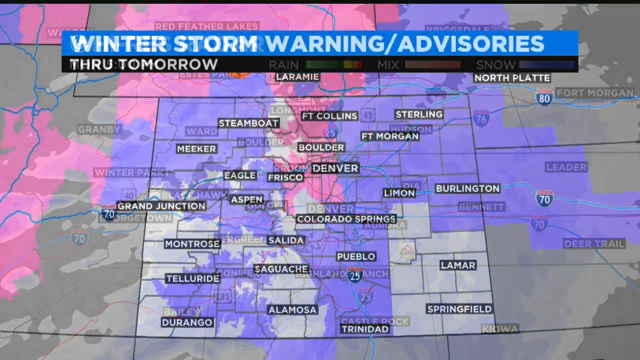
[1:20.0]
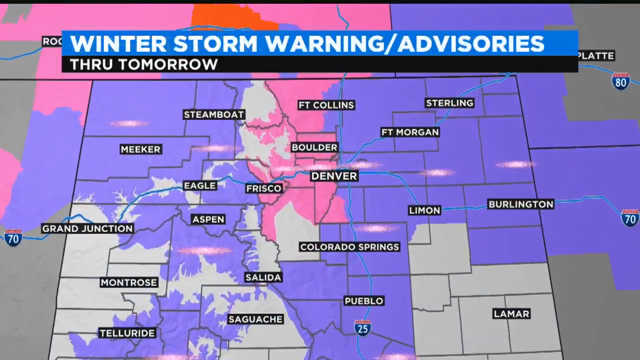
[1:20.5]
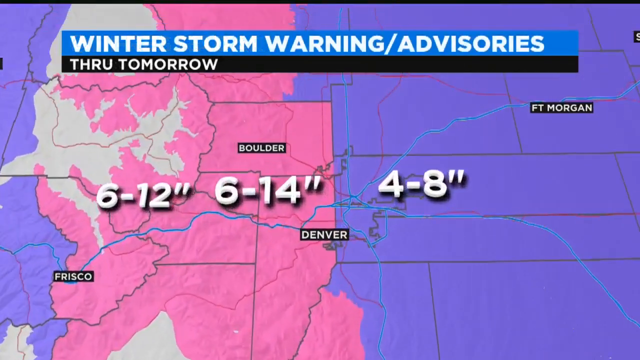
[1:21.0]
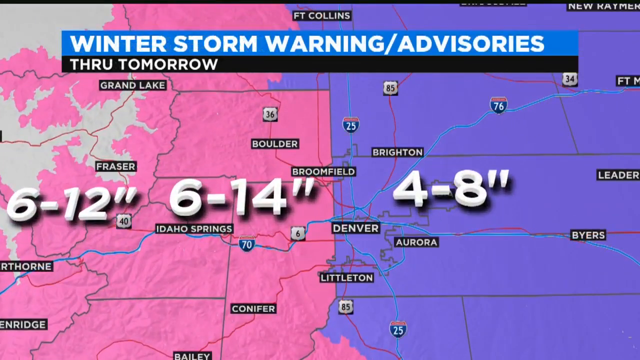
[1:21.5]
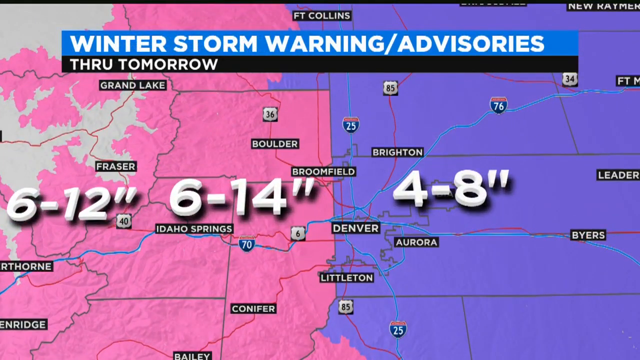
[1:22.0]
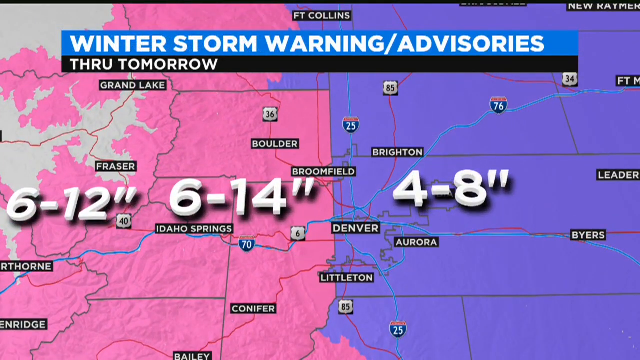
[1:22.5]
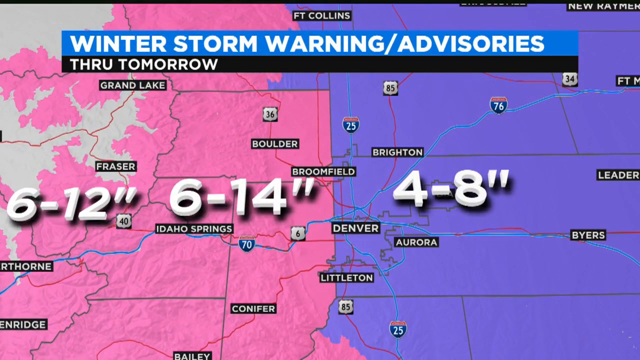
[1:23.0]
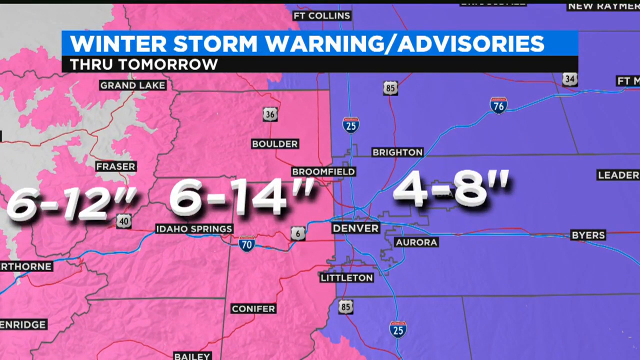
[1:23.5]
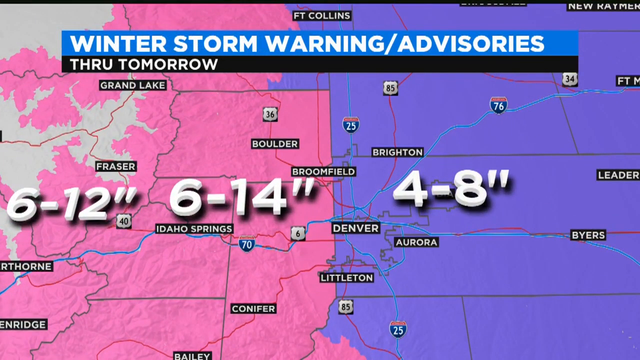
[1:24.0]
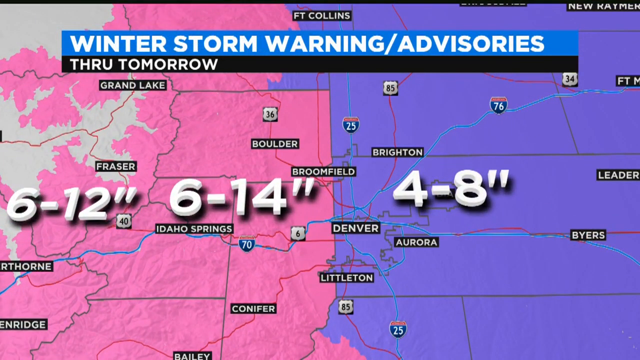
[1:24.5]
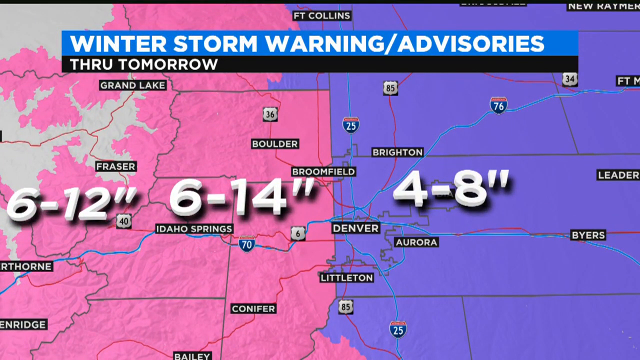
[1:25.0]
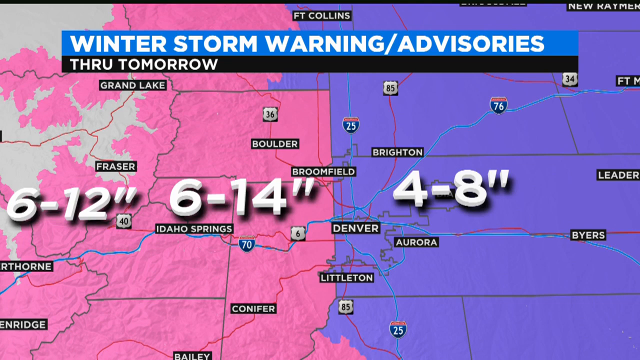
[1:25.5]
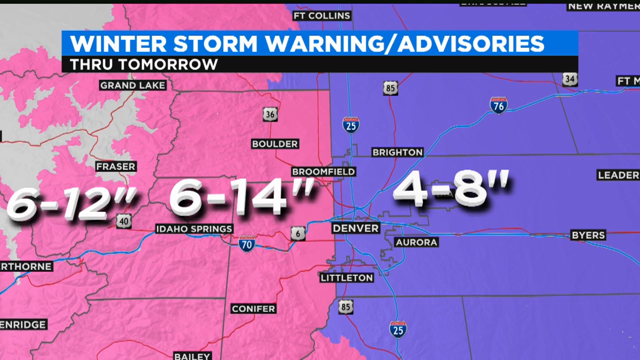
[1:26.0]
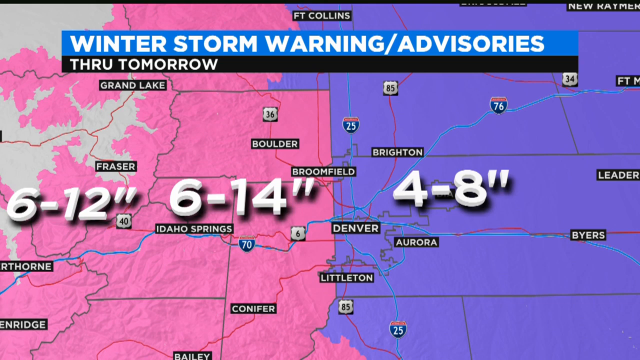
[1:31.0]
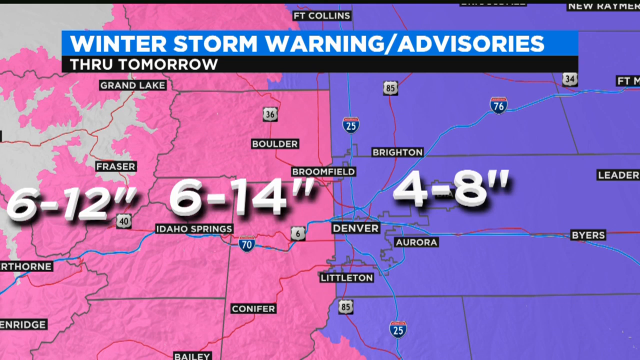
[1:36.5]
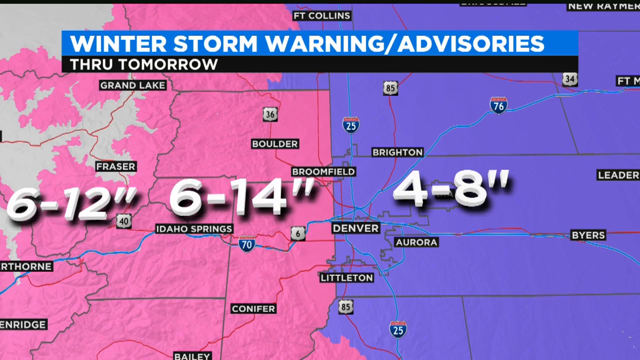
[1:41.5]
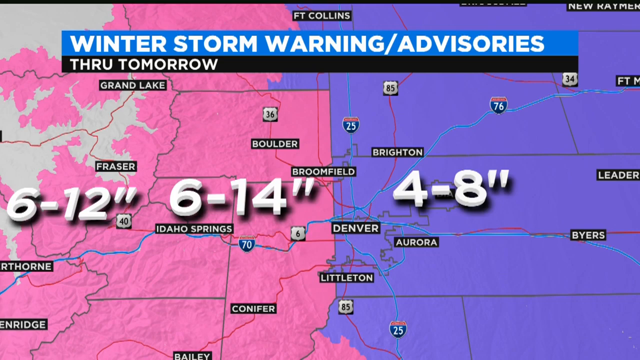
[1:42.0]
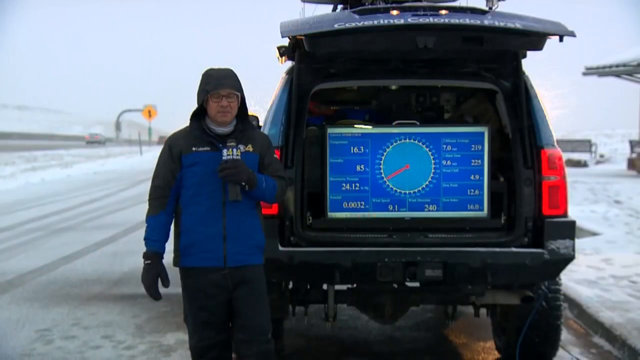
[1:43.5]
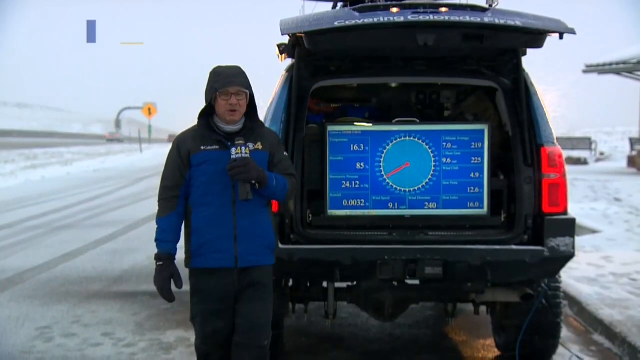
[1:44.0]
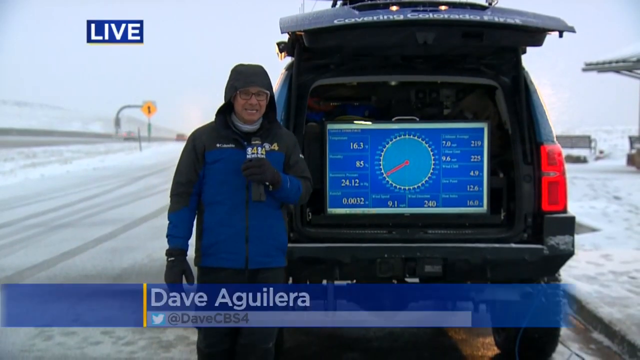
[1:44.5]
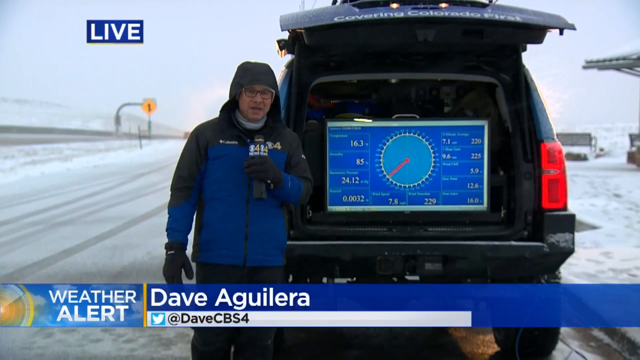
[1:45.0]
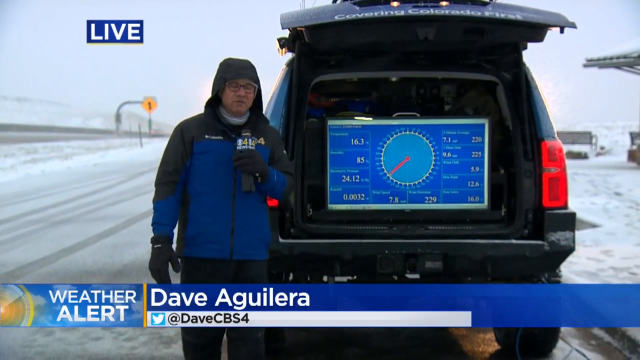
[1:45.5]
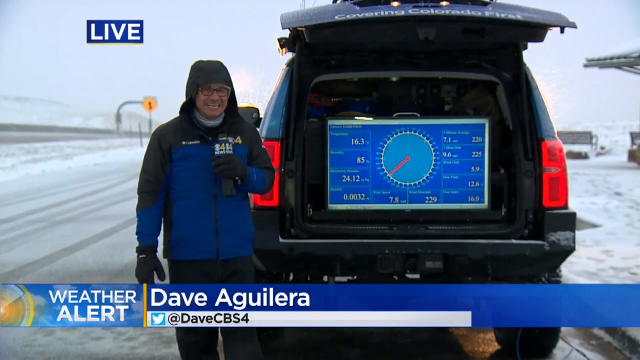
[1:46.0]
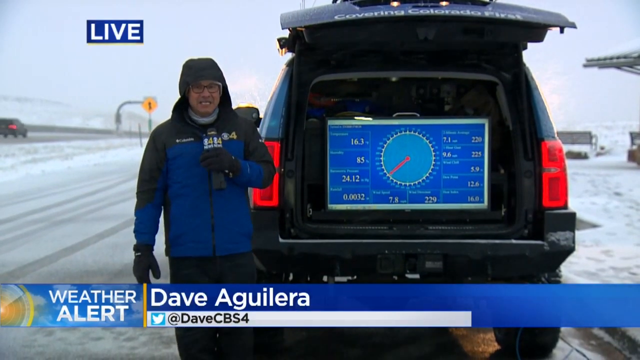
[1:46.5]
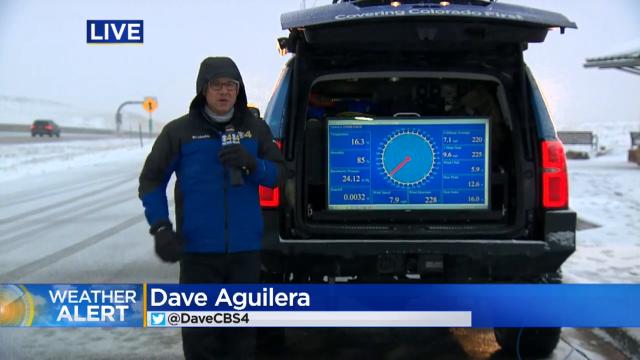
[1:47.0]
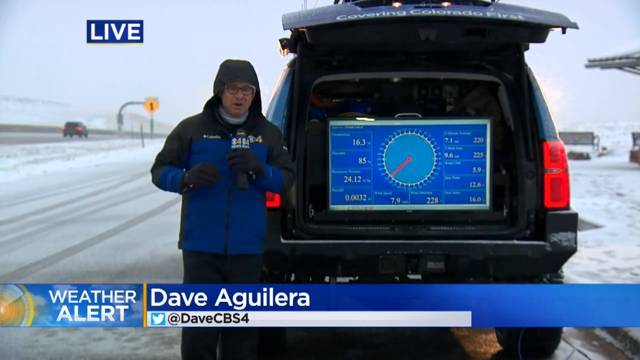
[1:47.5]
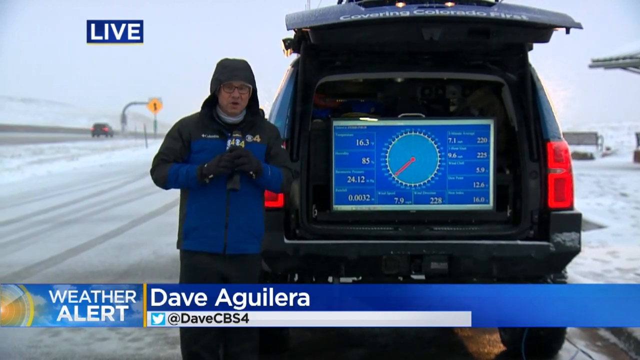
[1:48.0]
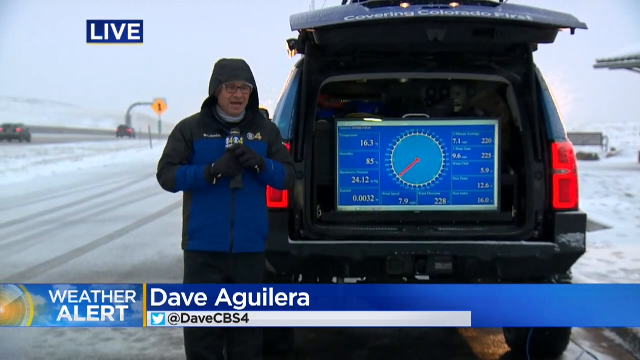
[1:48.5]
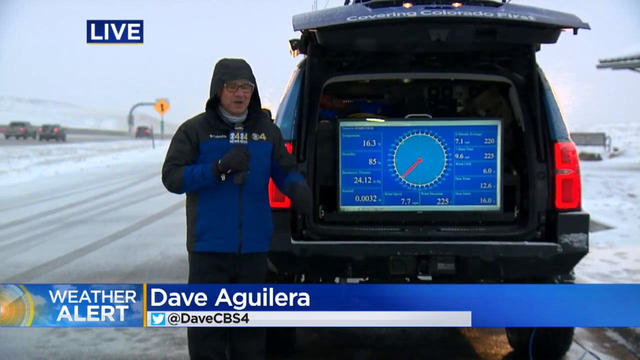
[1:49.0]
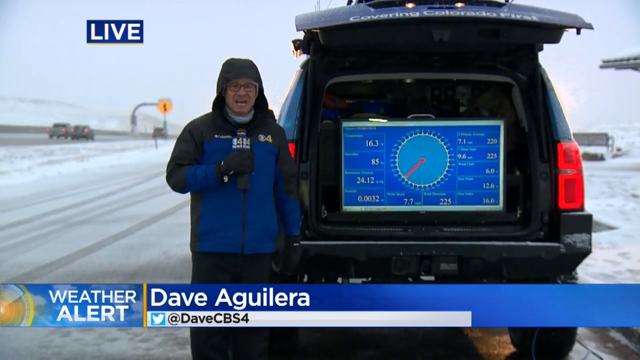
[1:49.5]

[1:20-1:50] What appears to be a high-res radar shows "Monday, 5 p.m." and a rain, mix and snow legend, with the map around Denver covered in a lot of white and blue, which looks like a lot of snow based on the legend. The scene then switches to a map titled "winter storm warning advisories through tomorrow", covering the area around Boulder and Denver. The left-hand side shows 6 to 12 and 6 to 14 inches, and the right side shows 4 to 8, with a division showing how much snow the areas are predicted to get. The heavier snow areas are pink and the lighter snow areas are blue, split roughly down the middle of Denver, with more snow on the pink left side and the blue 4 to 8 area on the right. City names such as Denver, Littleton, Aurora and Boulder appear on the map.